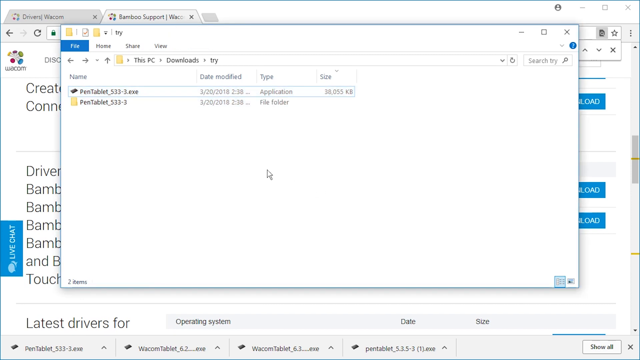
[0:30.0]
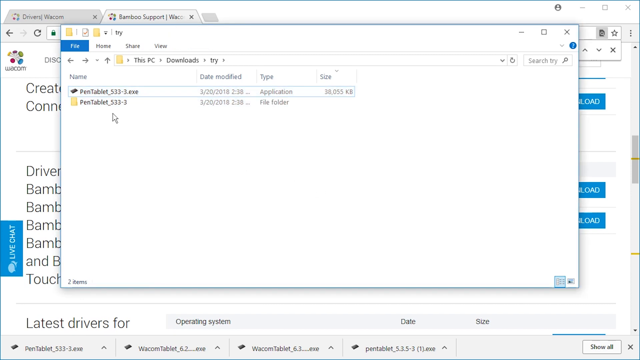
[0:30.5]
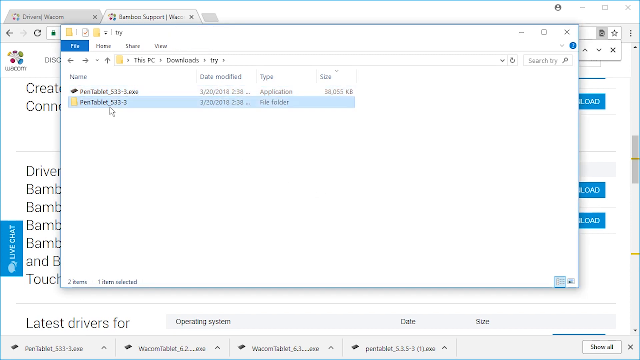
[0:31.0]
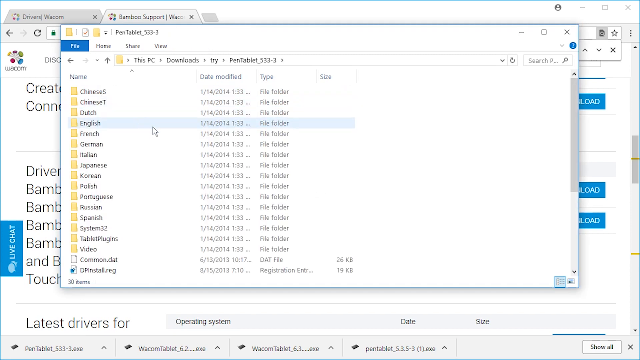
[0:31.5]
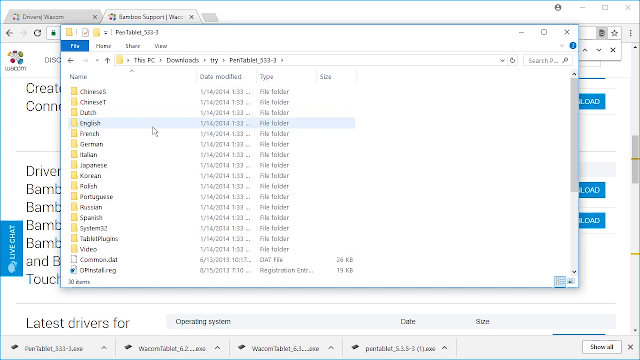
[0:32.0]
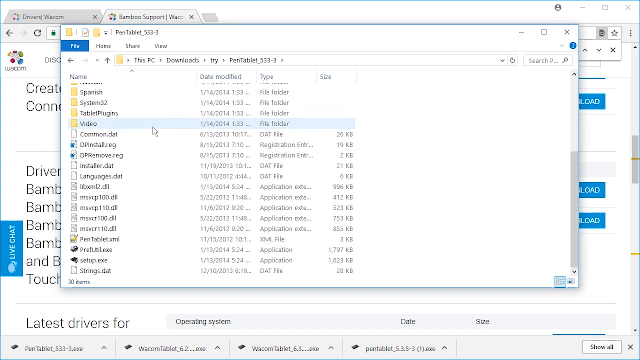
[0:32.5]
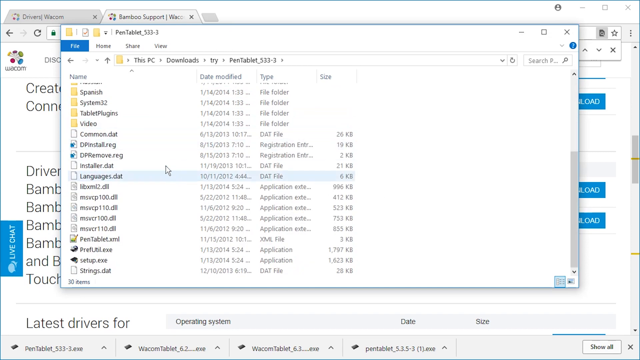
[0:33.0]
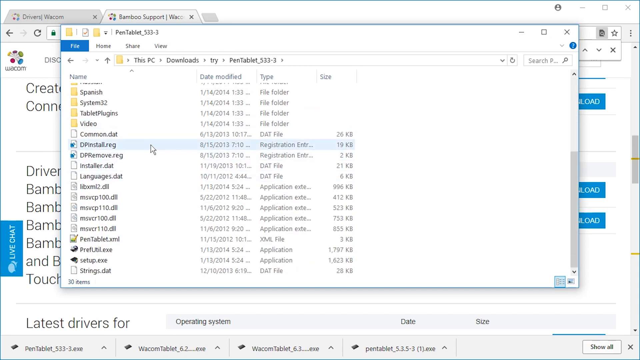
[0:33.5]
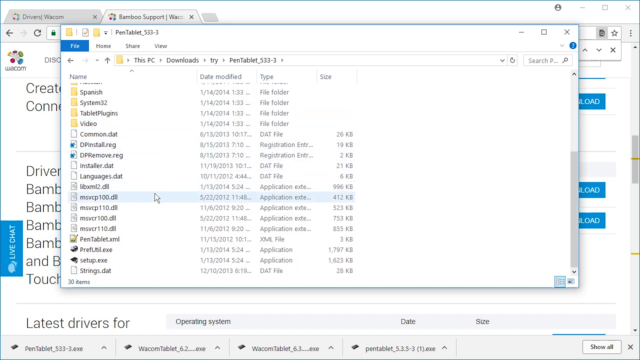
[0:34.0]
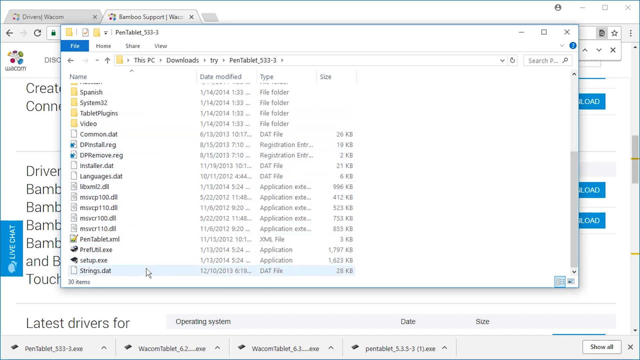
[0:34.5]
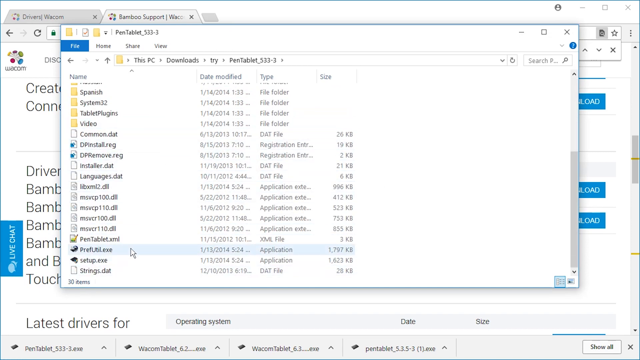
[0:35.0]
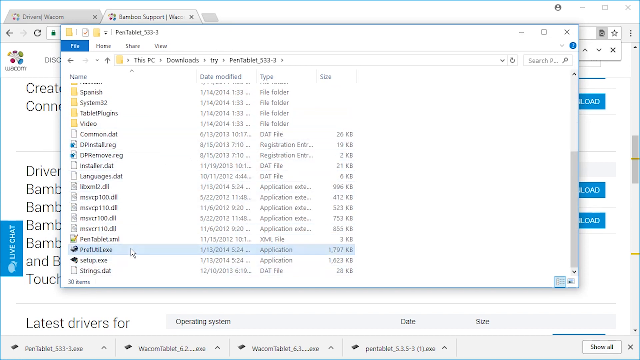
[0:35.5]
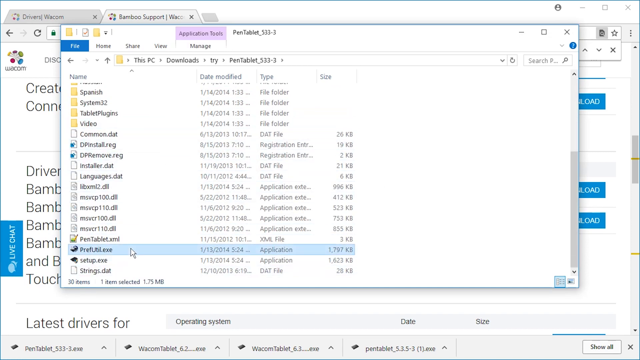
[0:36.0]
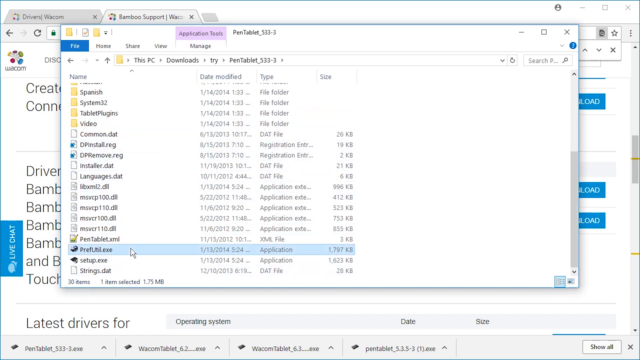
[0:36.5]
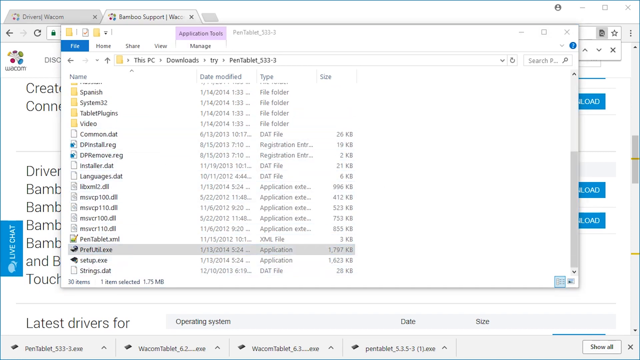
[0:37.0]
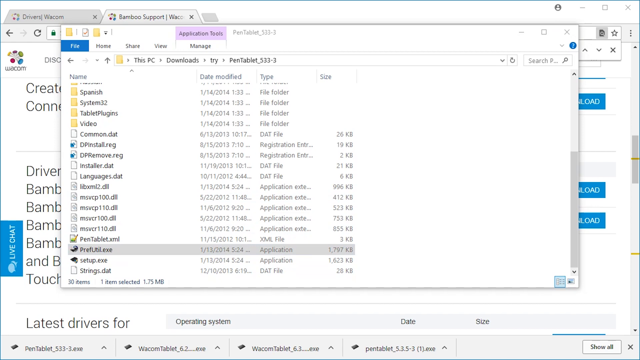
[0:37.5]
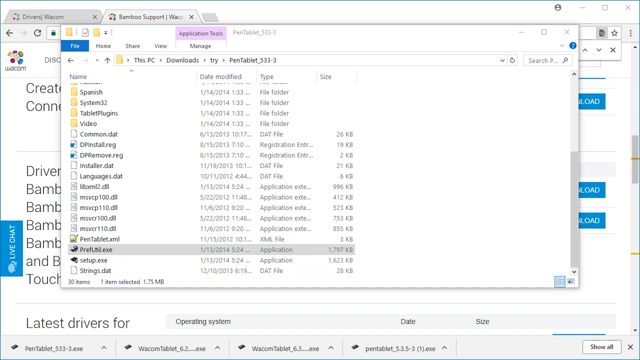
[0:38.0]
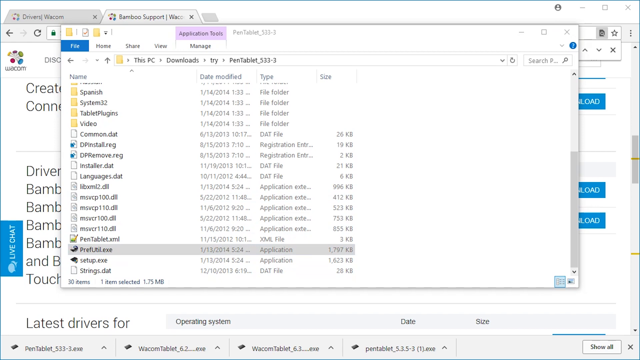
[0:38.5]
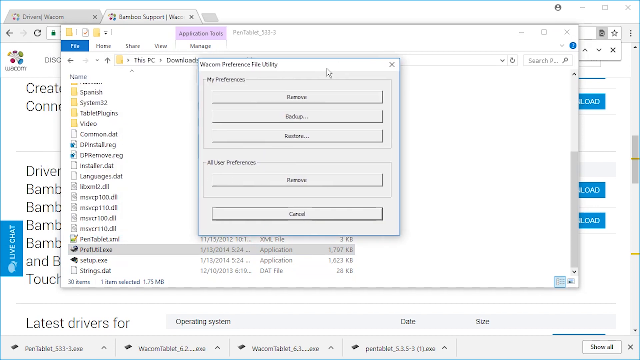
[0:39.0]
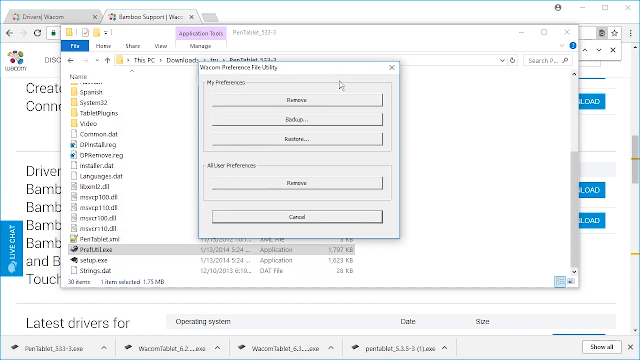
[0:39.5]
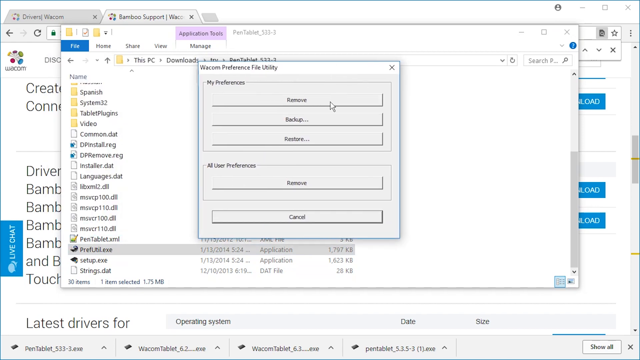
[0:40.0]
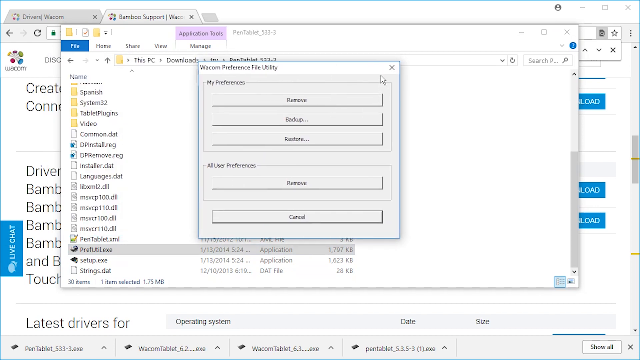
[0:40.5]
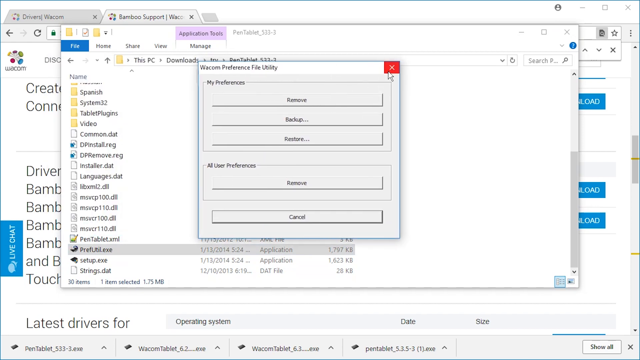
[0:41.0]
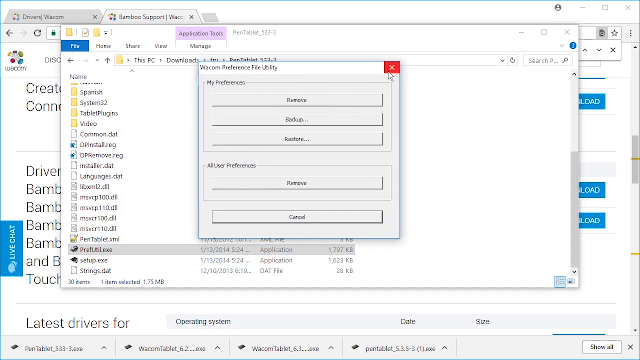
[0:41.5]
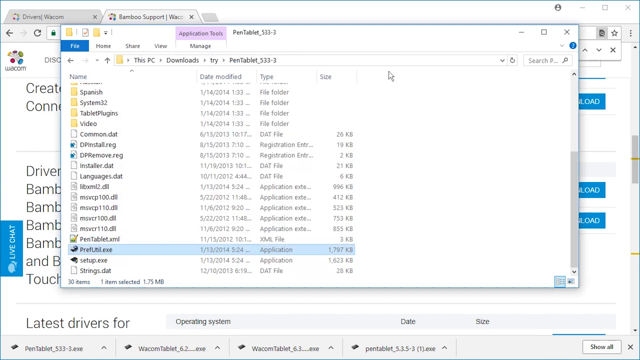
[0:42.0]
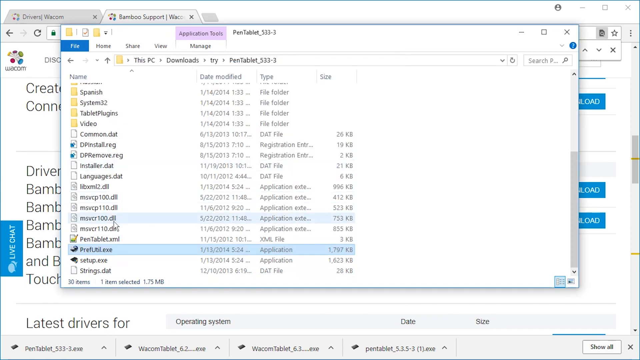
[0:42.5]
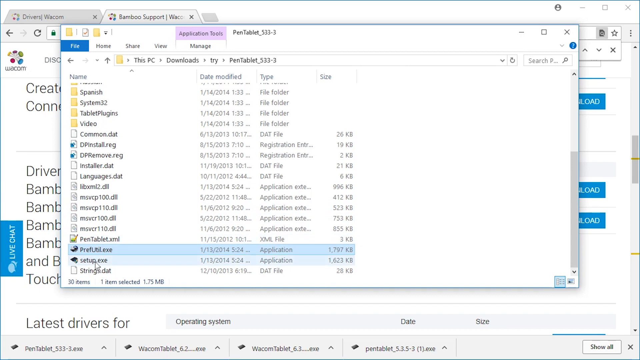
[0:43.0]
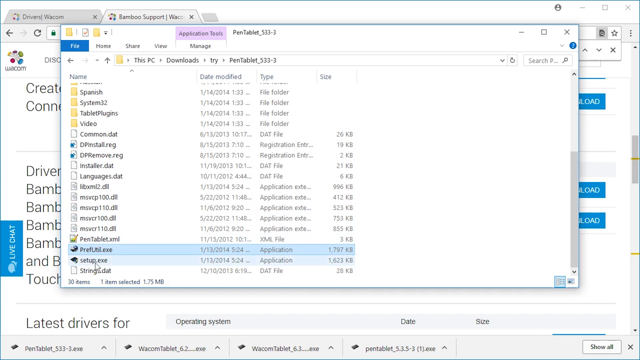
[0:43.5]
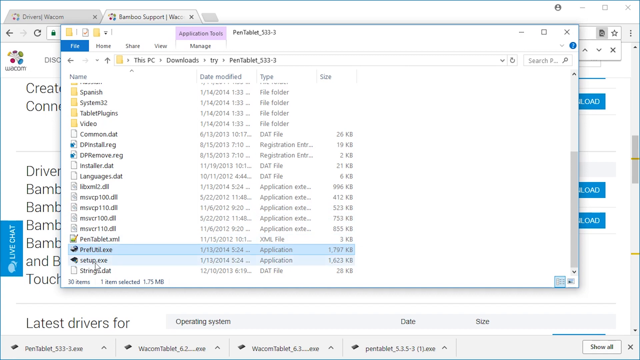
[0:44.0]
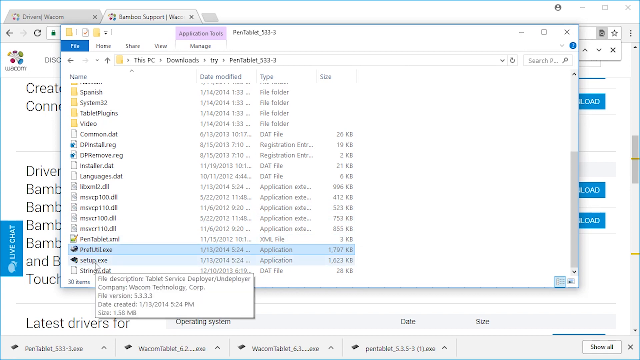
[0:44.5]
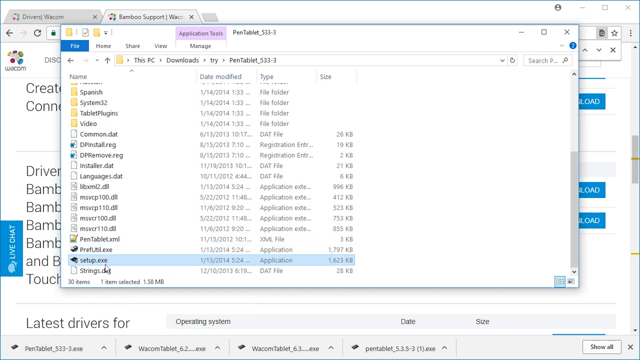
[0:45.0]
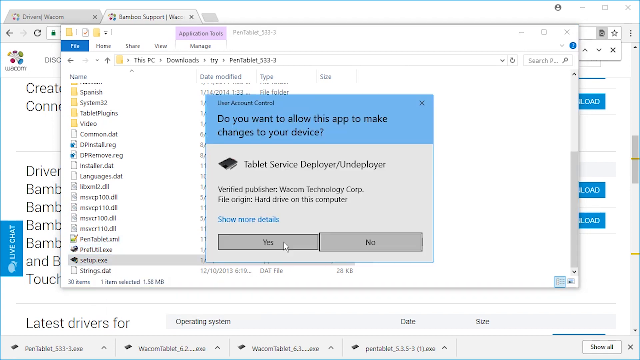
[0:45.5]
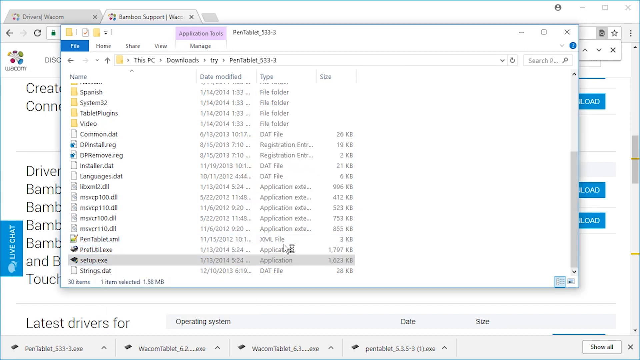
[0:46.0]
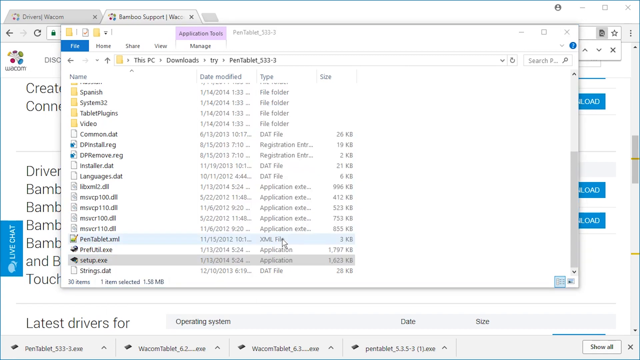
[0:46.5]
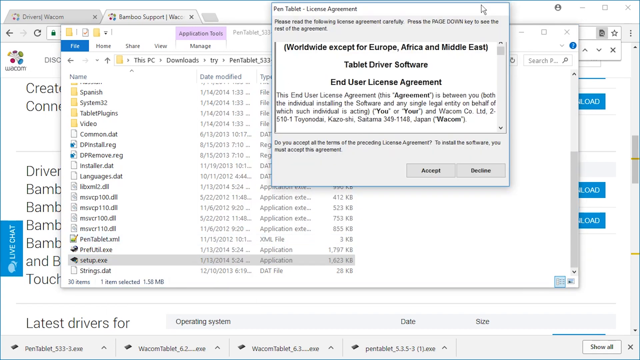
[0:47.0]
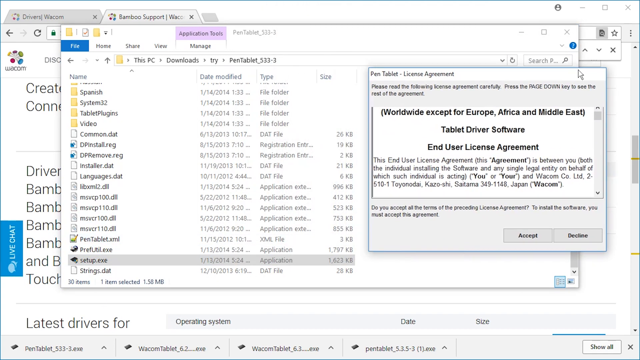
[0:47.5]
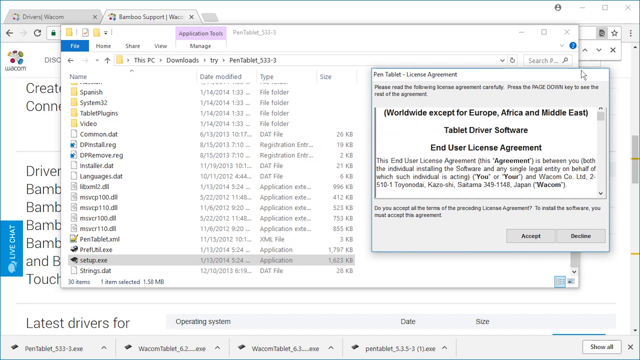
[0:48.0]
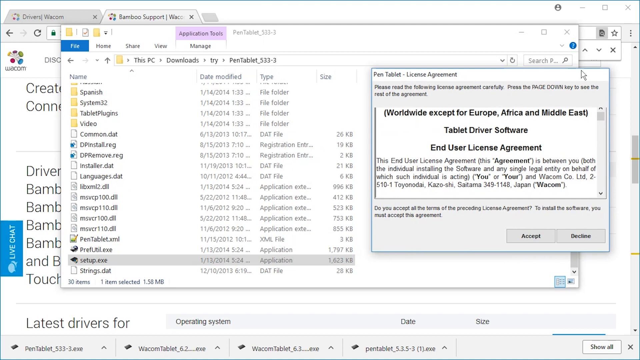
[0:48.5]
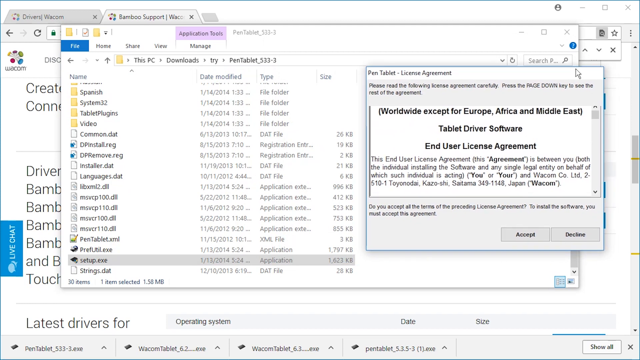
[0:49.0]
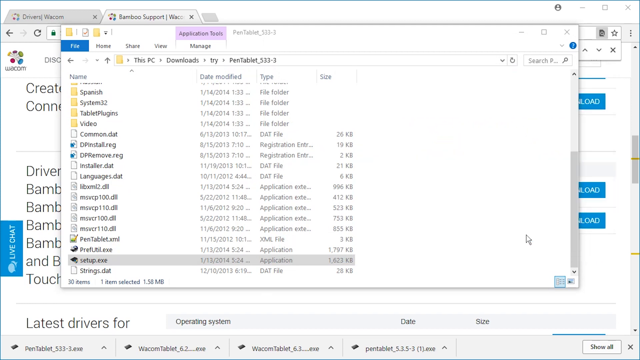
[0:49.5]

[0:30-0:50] The pentablet directory and pentablet.exe are shown. The pentablet directory is clicked, opening a directory with many different files in it, which are scrolled through. The view stops at one file and a Windows preference file for it opens. Setup.exe is then highlighted and the setup procedure begins. First the standard Microsoft prompt appears asking to allow changes to the hard disk with administrator privileges; after that screen goes away, the Windows install manager starts with a license agreement, which is clicked through, and the pen tablet installation begins. Setup.exe is far from the only file in the directory; the list apparently starts with prefunit.exe, and a Windows settings file utility is also checked.